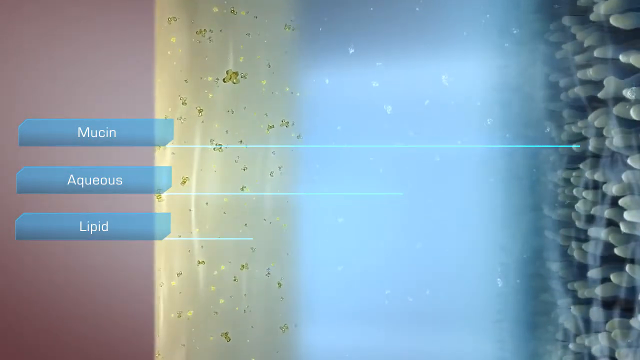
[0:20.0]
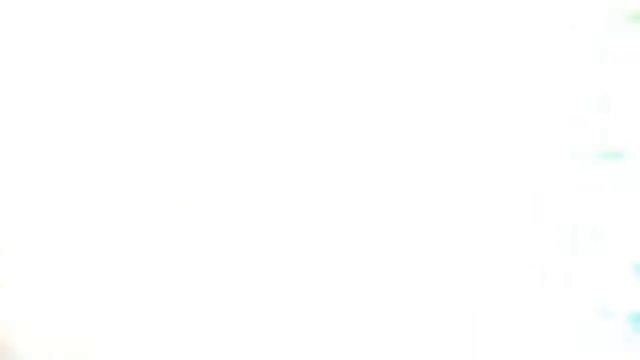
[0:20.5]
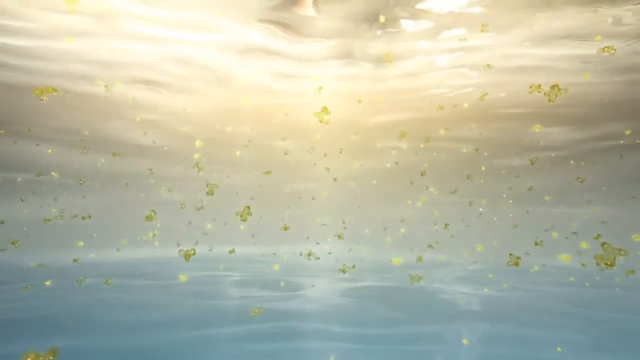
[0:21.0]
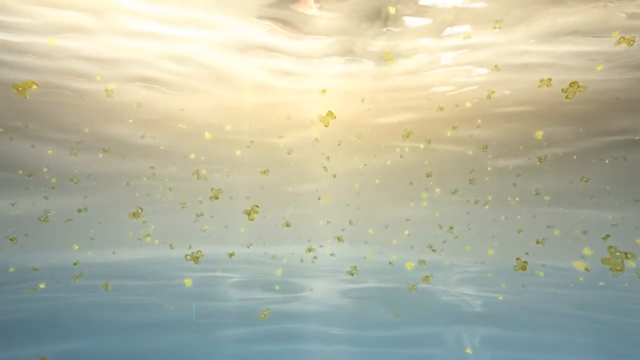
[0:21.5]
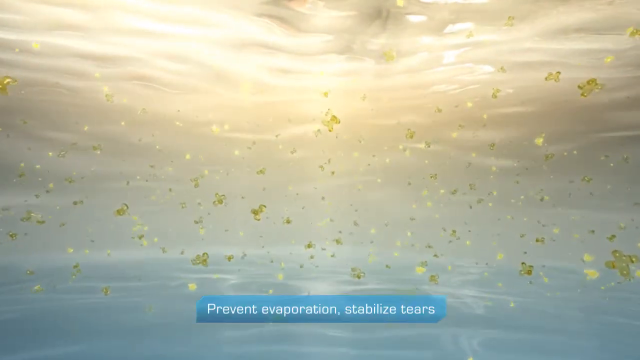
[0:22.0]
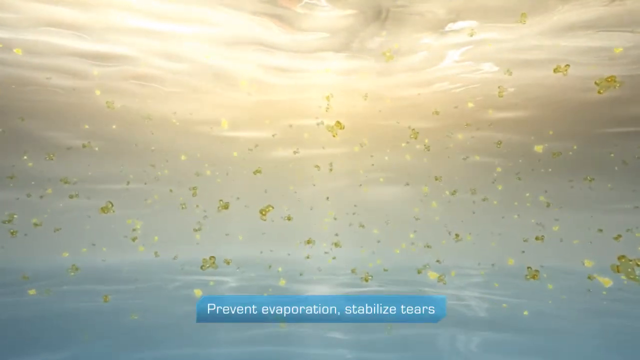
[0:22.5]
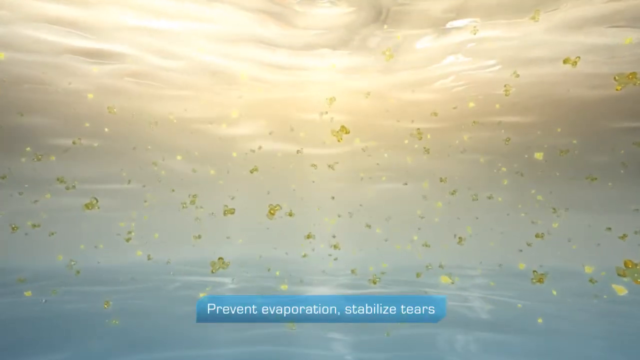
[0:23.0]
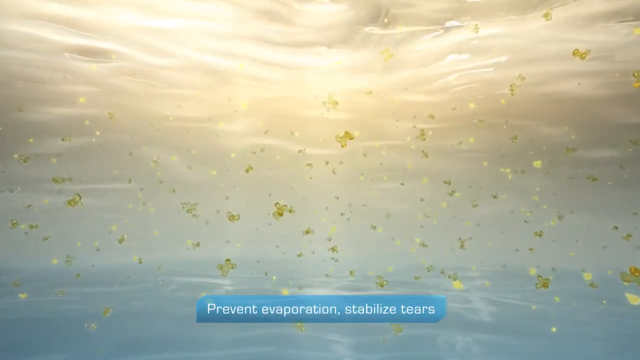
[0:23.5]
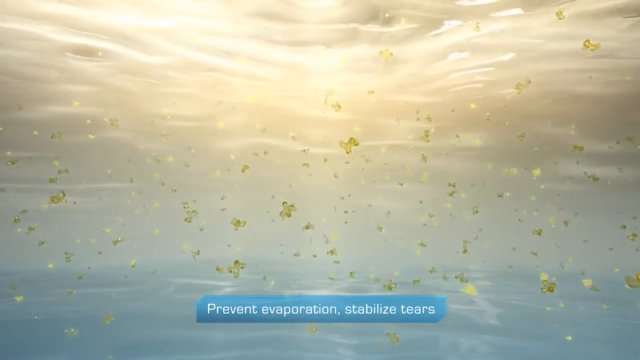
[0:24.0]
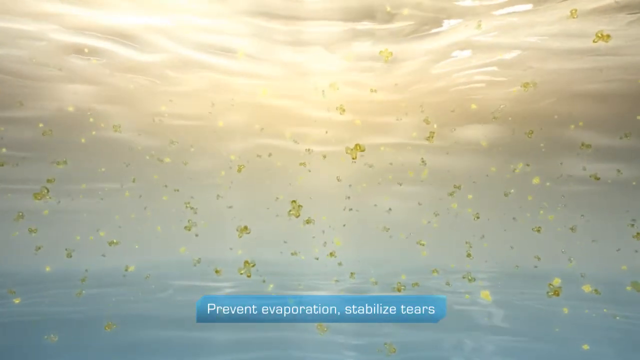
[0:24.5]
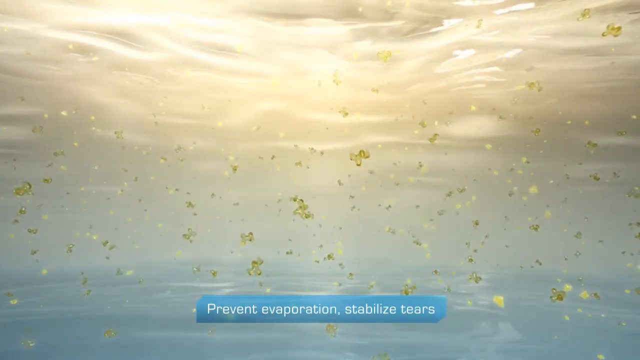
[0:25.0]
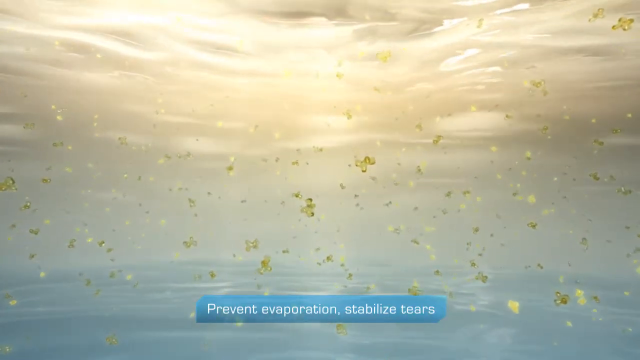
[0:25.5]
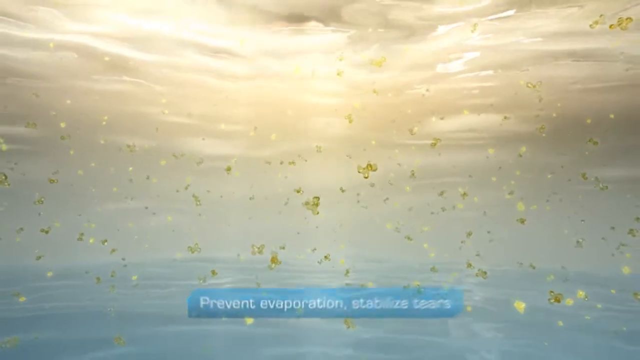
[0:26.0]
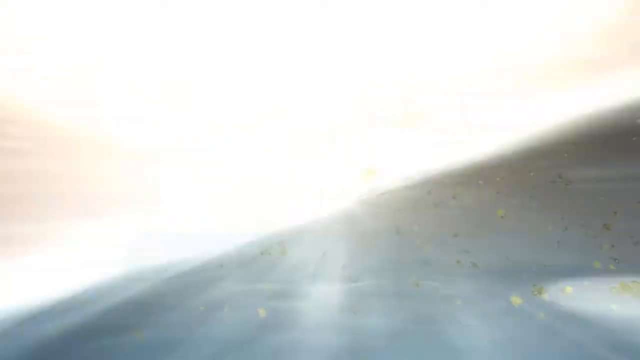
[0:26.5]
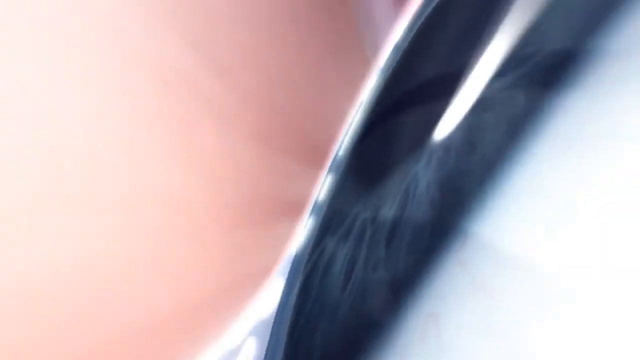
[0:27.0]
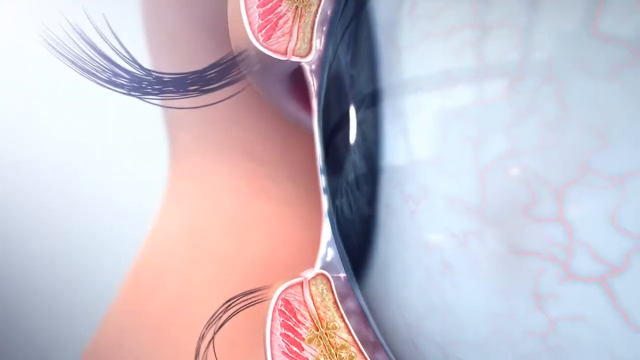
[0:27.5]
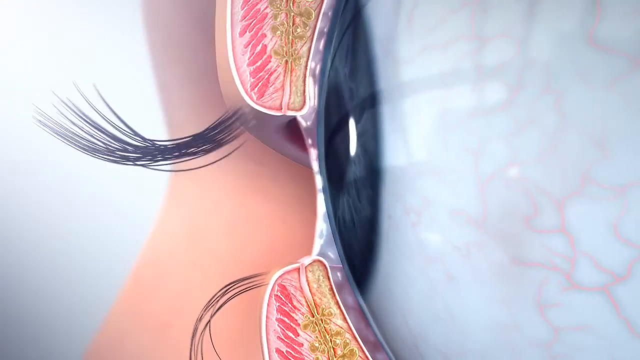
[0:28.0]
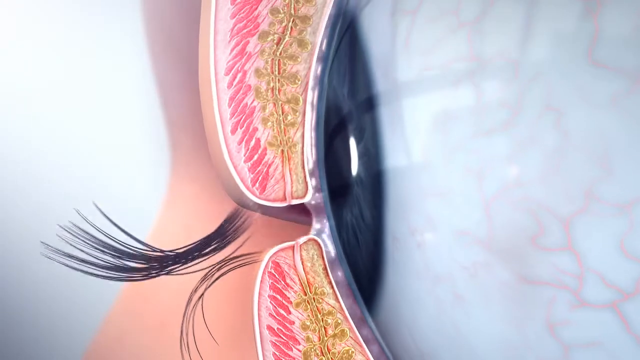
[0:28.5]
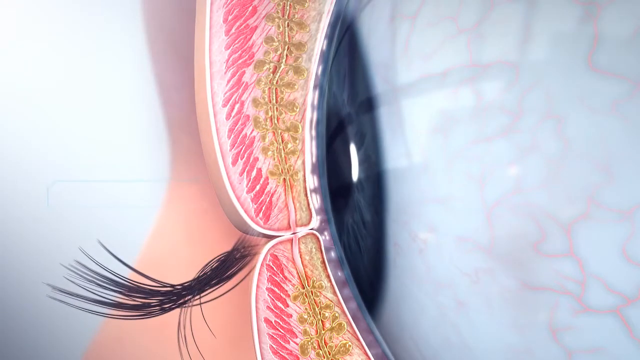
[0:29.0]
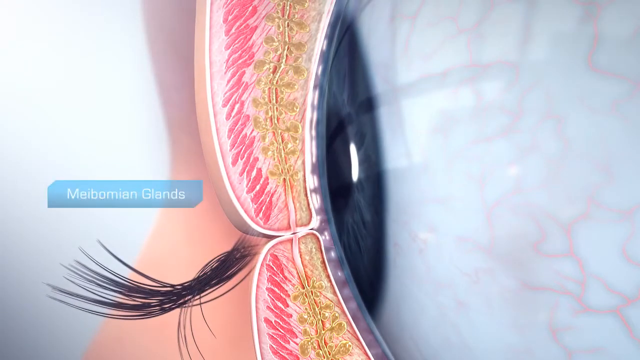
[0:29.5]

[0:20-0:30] The three layers remain on screen with things sort of floating around. The view transitions to a zoomed-in look at what is apparently the lipid layer, judging by the color, with a lot of material floating around, and text at the bottom says "prevent evaporation stabilize tears". It then zooms back out to a profile image of an eyeball, with the inside of the eyelids sort of drawn in, apparently showing muscle and a fat layer, and the lashes sticking out over that. A pop-up in blue on the left of the screen says "Meibomian glands".